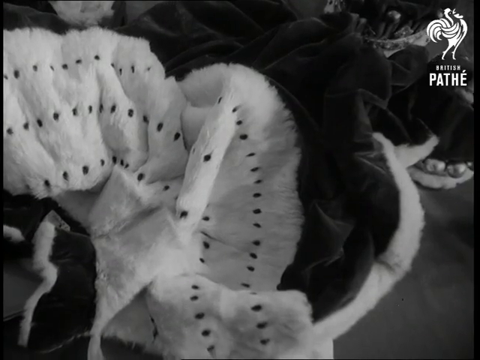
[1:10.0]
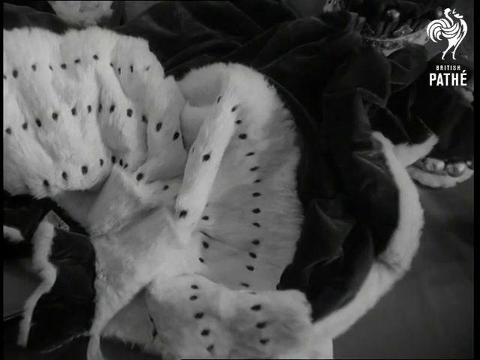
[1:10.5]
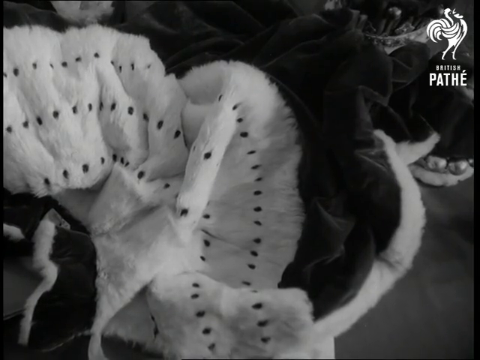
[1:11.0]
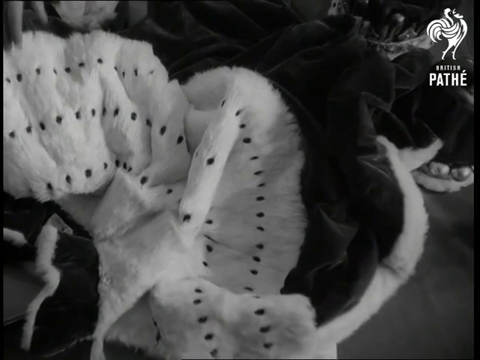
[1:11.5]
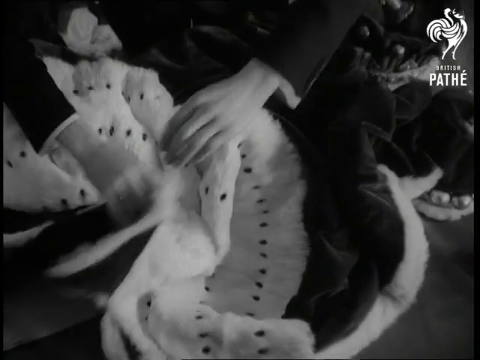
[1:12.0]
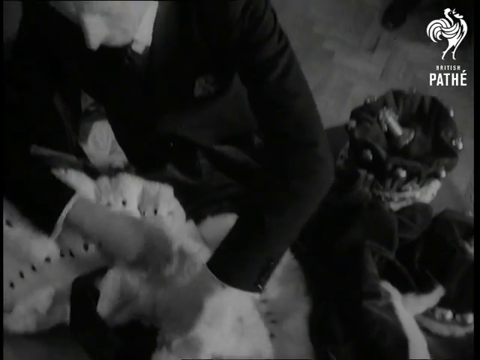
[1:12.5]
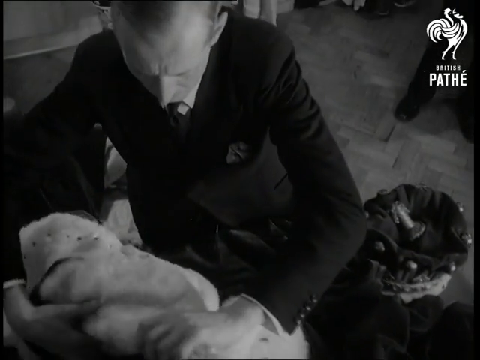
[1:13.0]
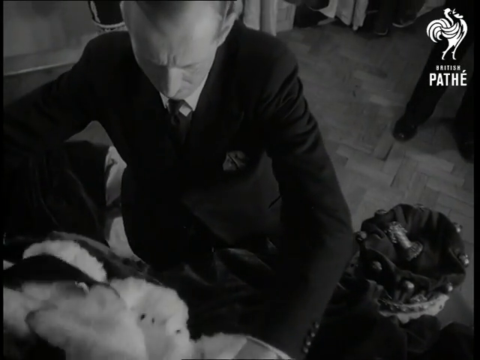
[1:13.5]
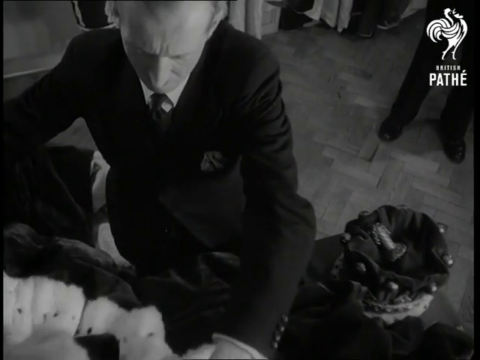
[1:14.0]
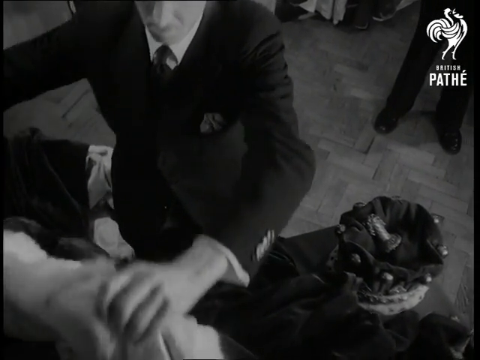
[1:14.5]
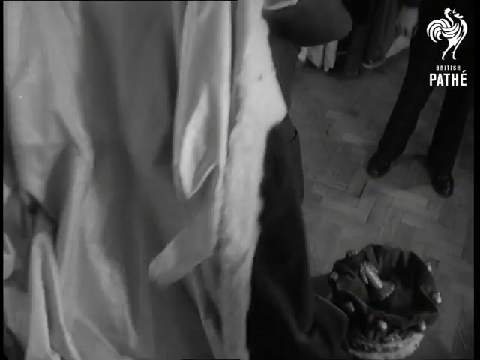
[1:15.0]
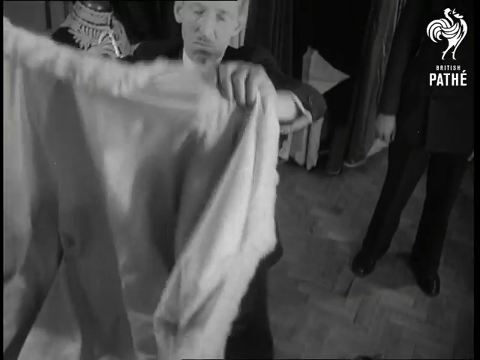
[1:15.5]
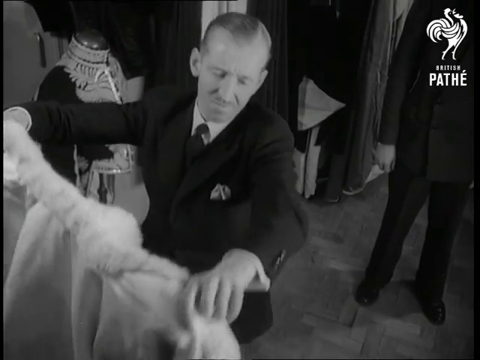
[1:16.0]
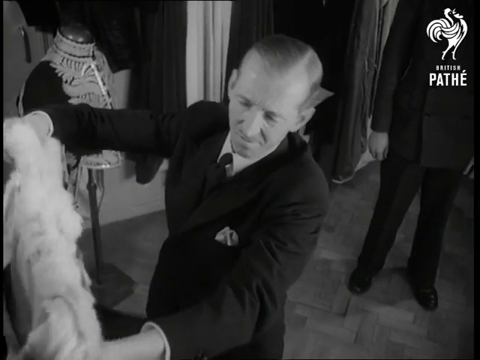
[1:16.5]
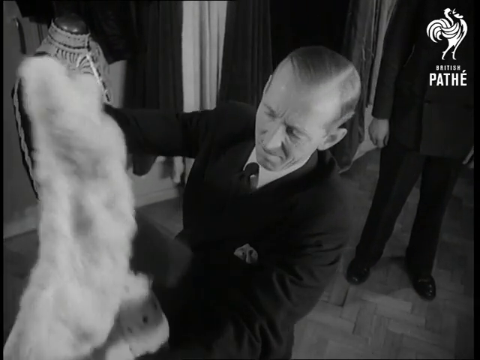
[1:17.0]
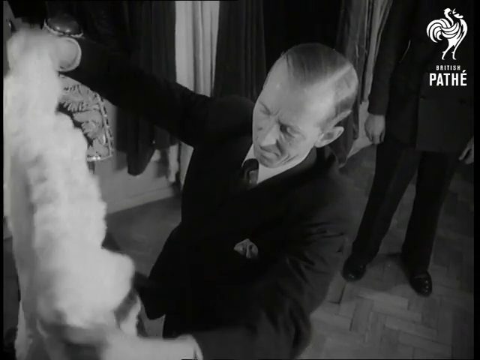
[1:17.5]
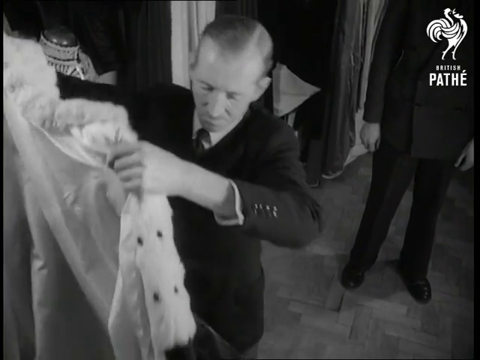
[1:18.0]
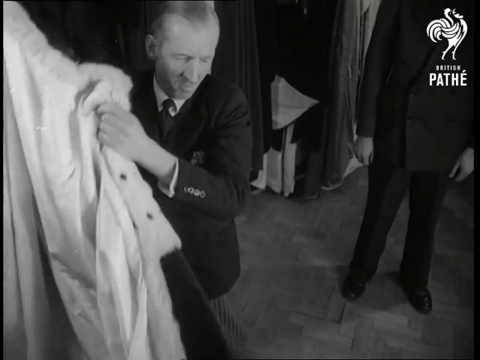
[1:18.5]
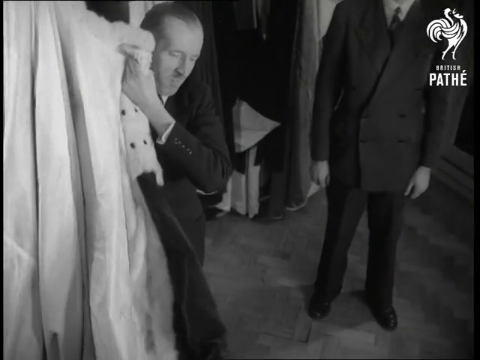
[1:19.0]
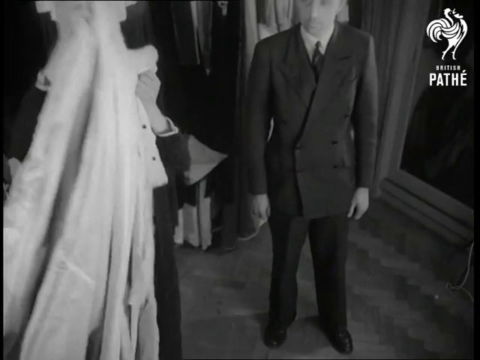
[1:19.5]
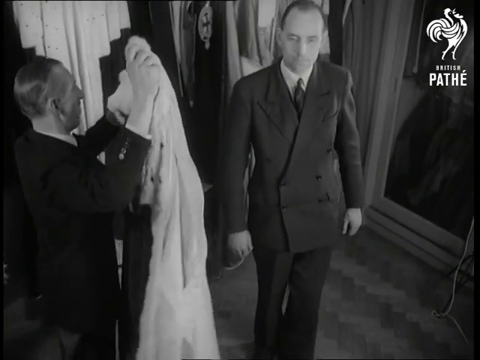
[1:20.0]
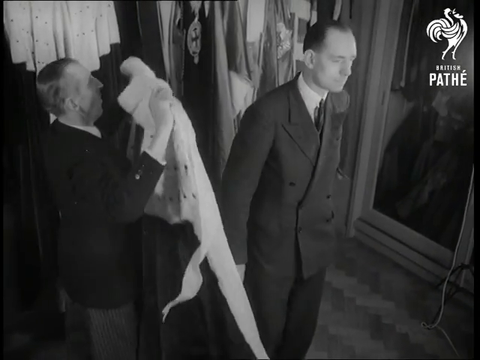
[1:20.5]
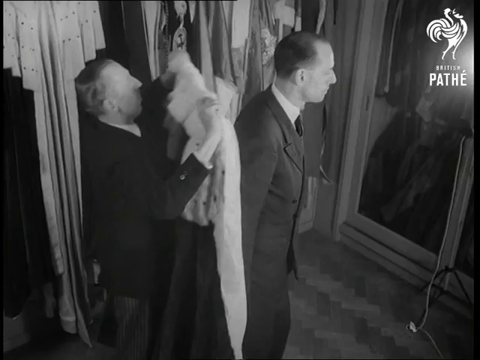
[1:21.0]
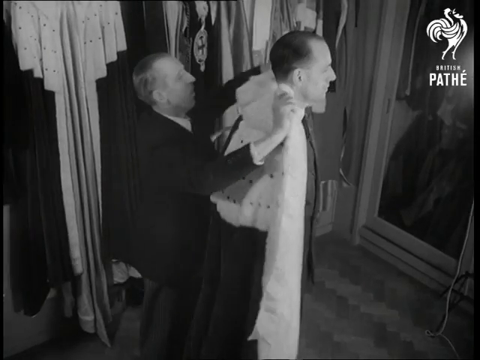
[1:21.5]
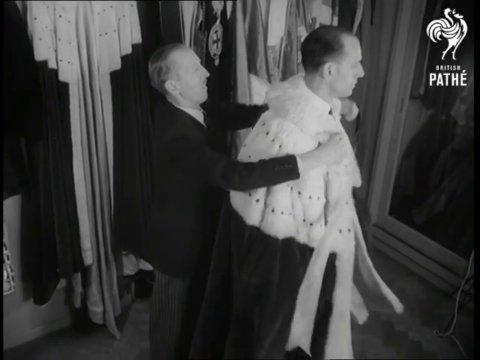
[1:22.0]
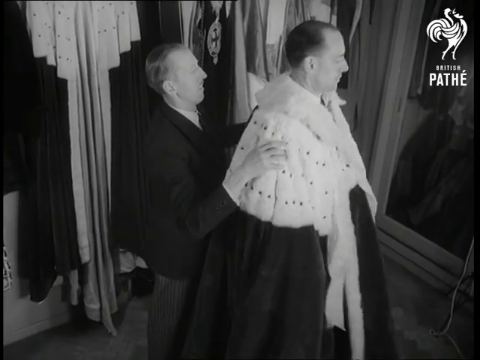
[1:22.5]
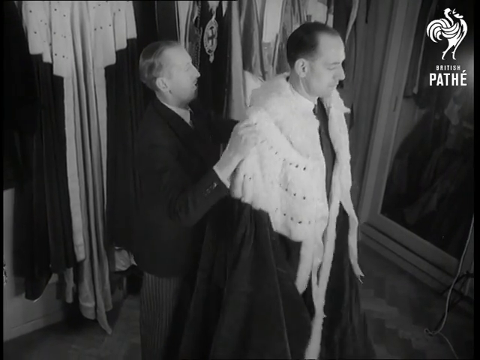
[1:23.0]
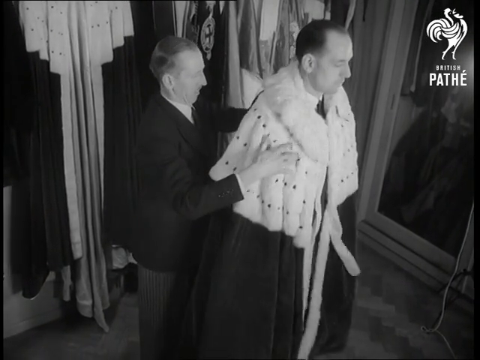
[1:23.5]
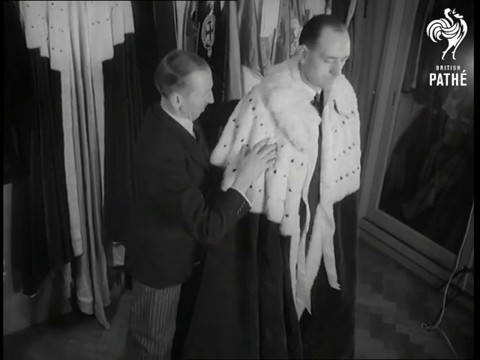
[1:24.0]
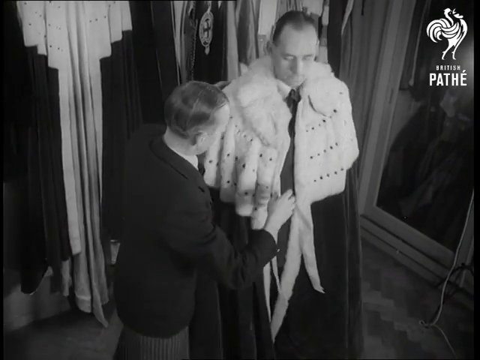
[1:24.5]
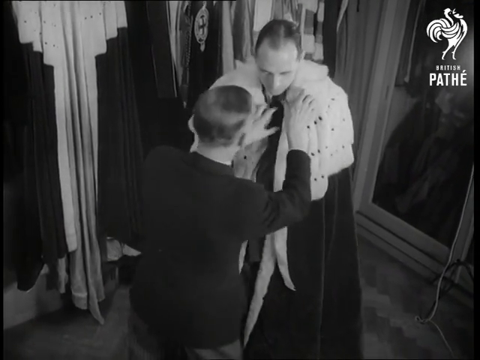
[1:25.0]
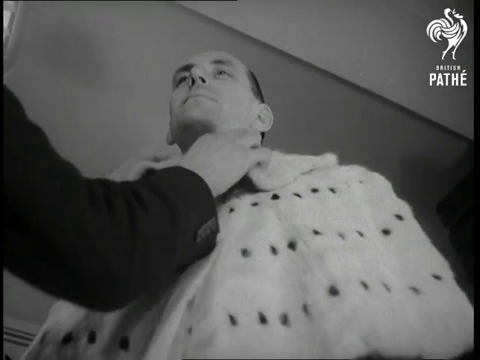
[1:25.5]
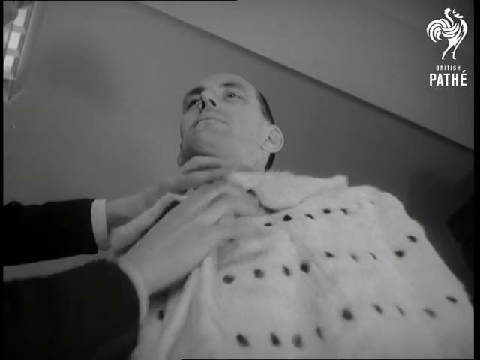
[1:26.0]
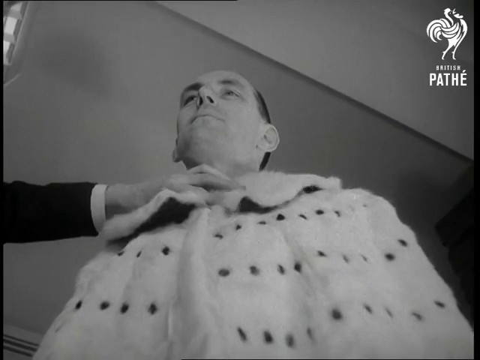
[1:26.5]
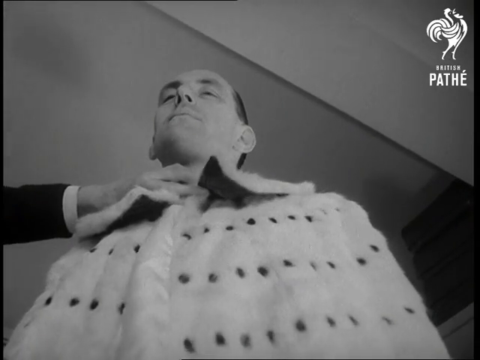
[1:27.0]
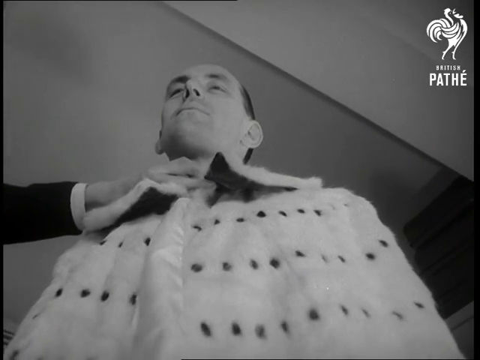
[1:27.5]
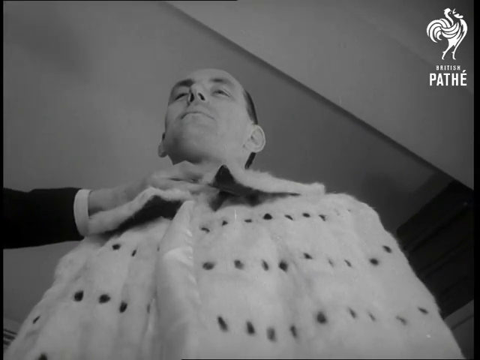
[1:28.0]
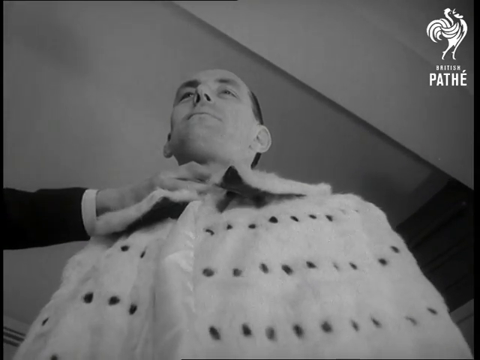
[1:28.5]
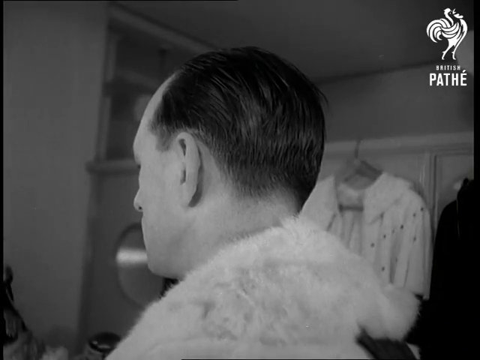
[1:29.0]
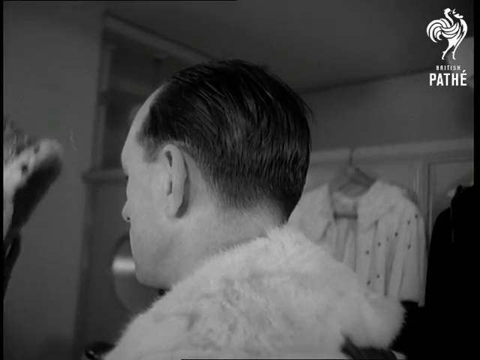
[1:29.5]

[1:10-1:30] A man in a suit picks up a garment, almost like a robe, and shakes it out. He then puts it on another gentleman wearing a suit, placing it over him as if to try it on, adjusting the collar and seeing how it fits around the chest. He then puts the crown on him. The back of the gentleman's head is visible; both gentlemen have shorter, slicked-back hair and wear business attire with double-breasted suits. It appears to be perhaps a costume fitting. A mirror is on the side of the wall, along with a light bulb.